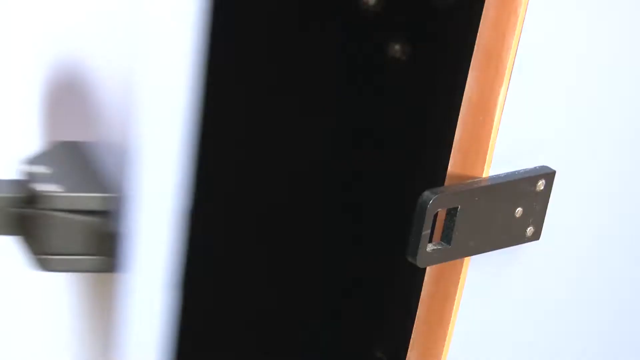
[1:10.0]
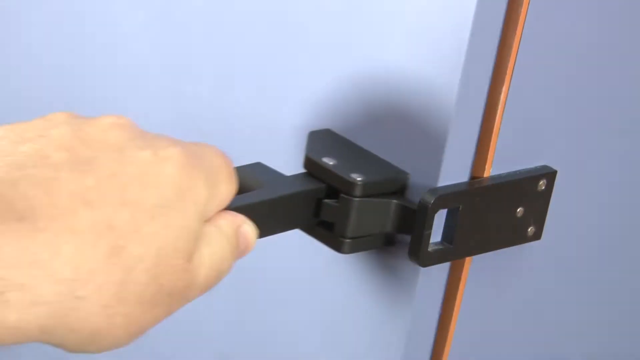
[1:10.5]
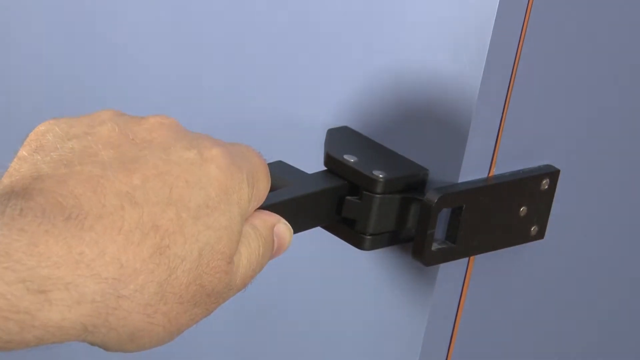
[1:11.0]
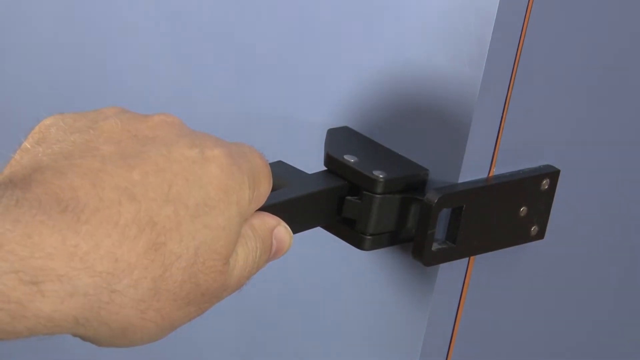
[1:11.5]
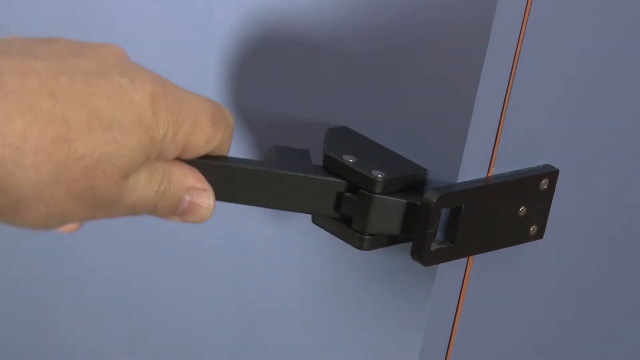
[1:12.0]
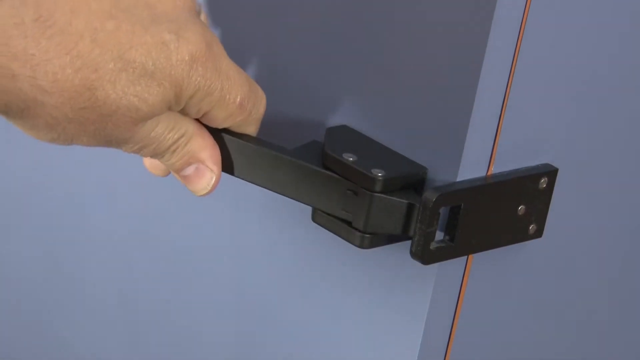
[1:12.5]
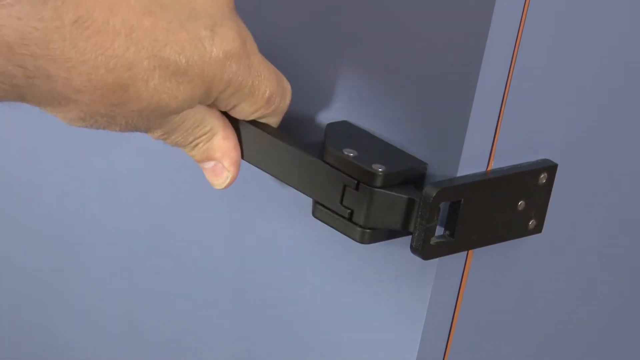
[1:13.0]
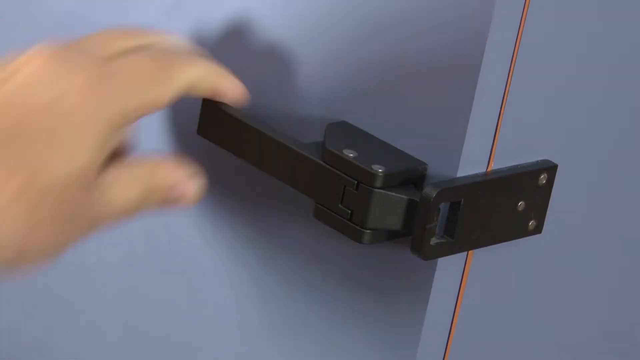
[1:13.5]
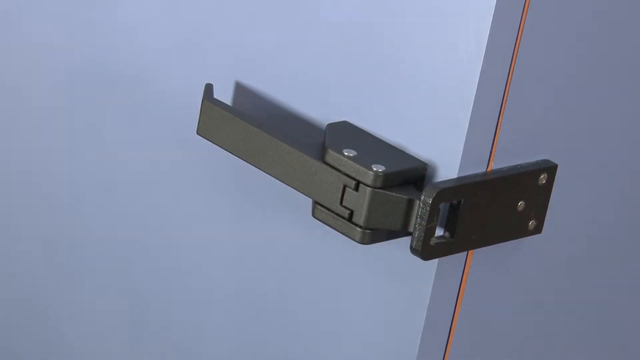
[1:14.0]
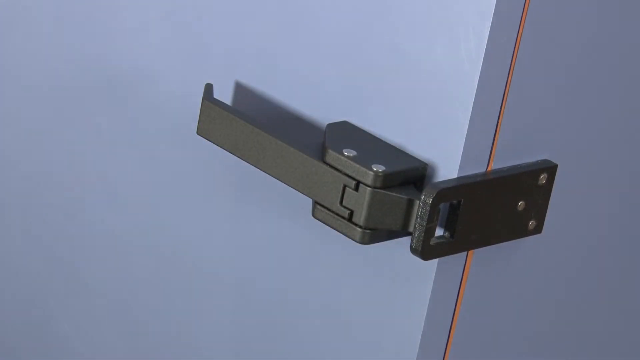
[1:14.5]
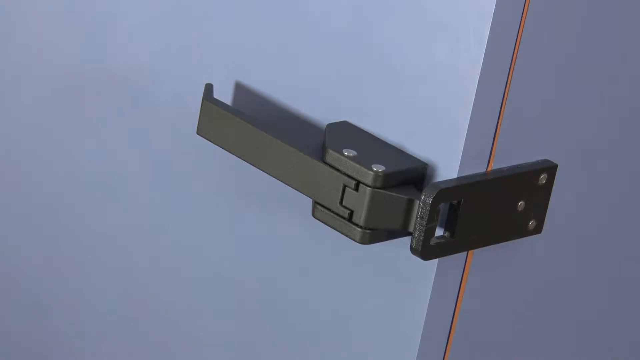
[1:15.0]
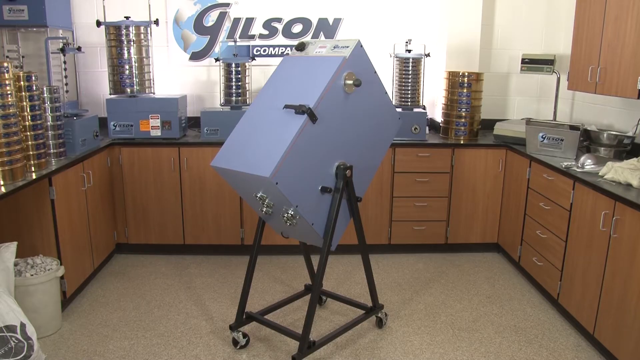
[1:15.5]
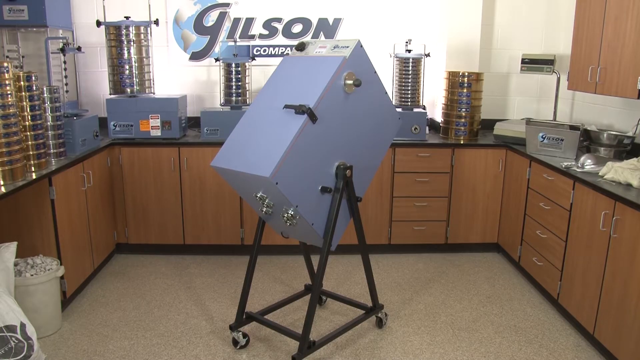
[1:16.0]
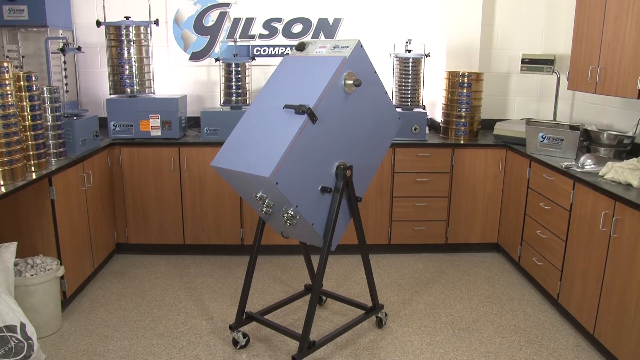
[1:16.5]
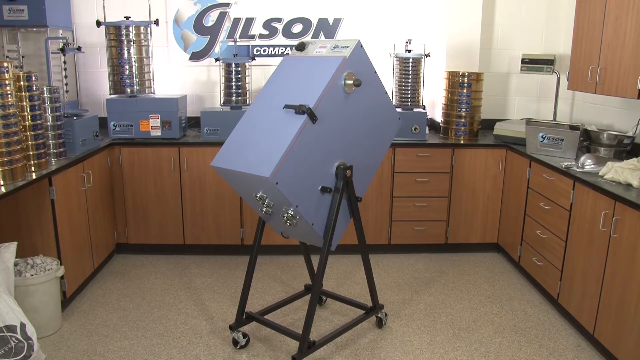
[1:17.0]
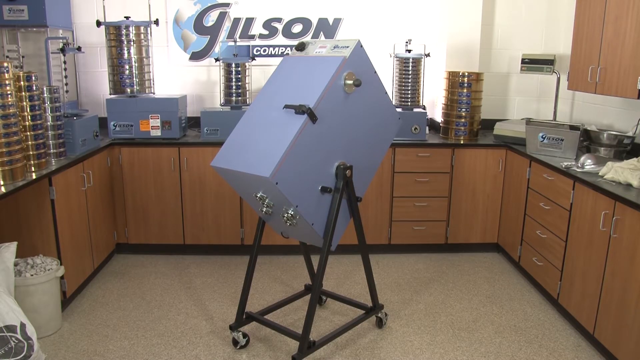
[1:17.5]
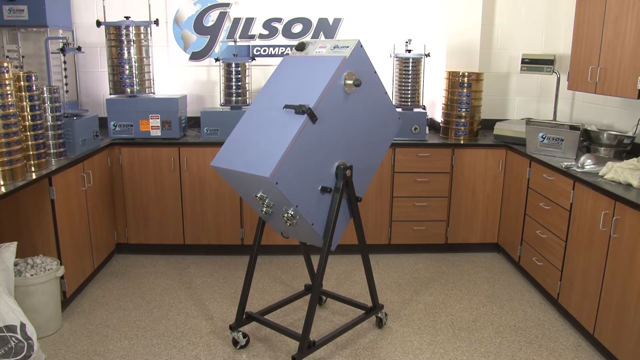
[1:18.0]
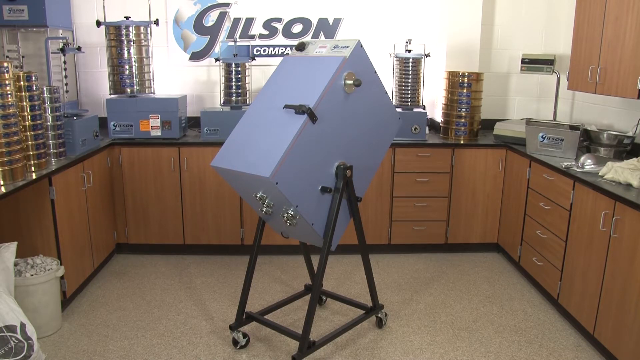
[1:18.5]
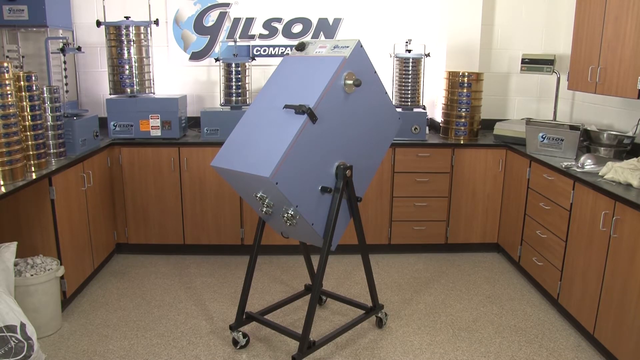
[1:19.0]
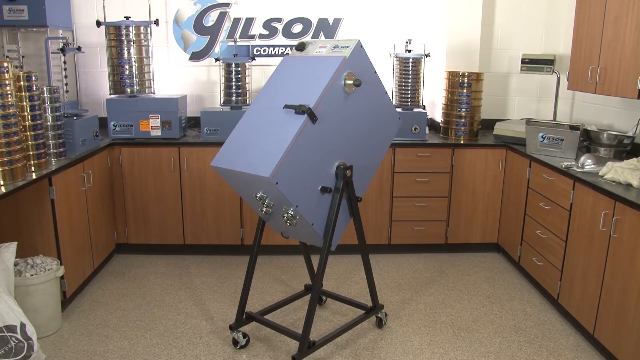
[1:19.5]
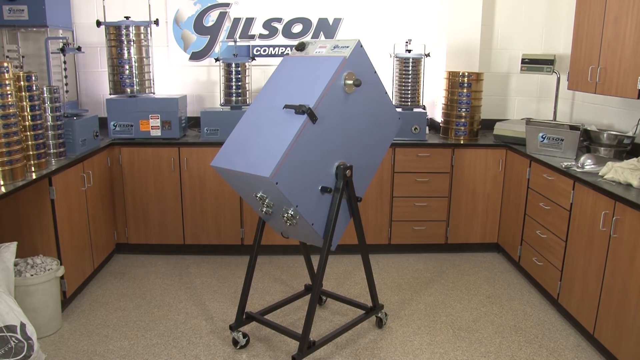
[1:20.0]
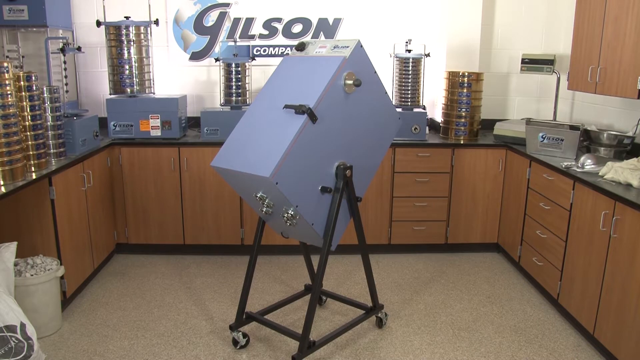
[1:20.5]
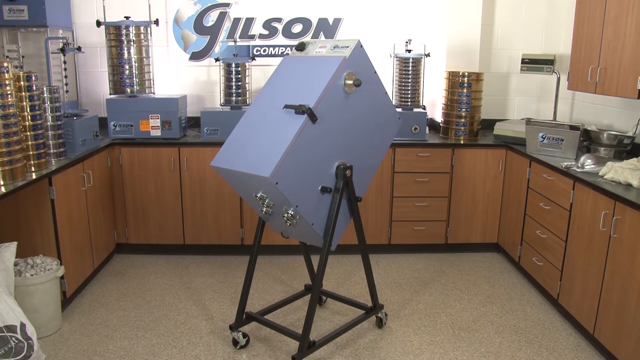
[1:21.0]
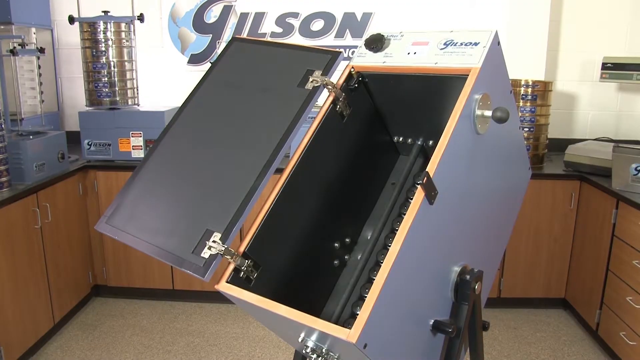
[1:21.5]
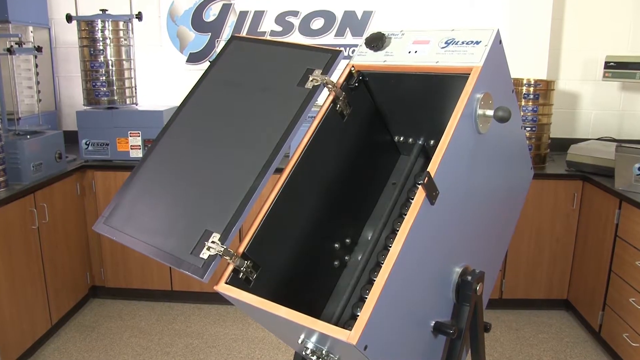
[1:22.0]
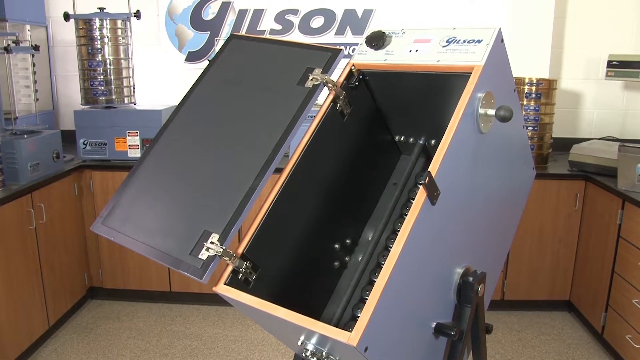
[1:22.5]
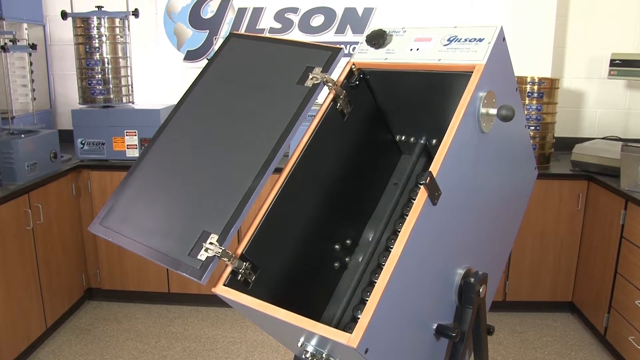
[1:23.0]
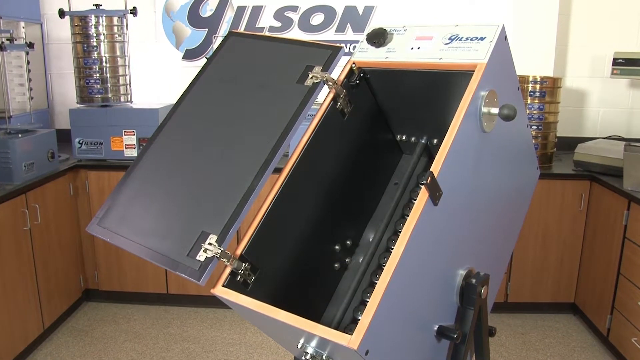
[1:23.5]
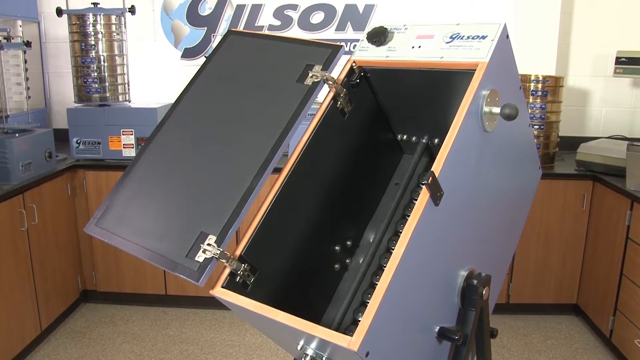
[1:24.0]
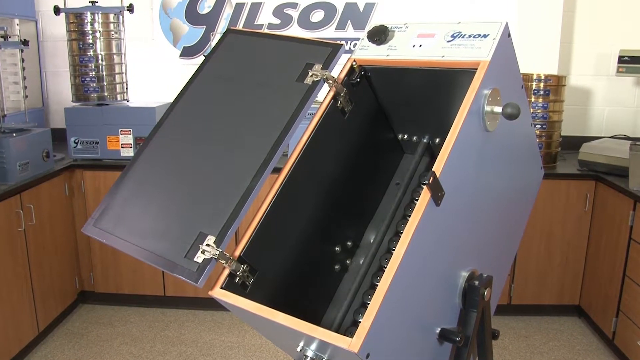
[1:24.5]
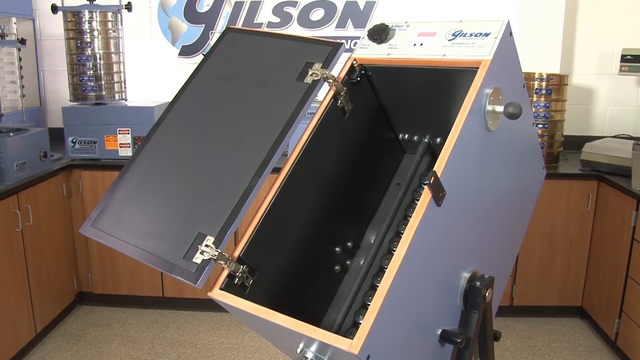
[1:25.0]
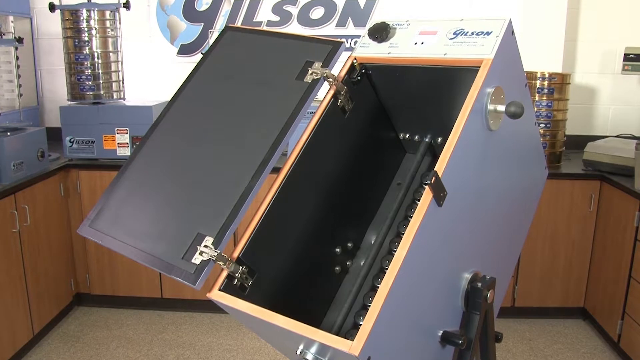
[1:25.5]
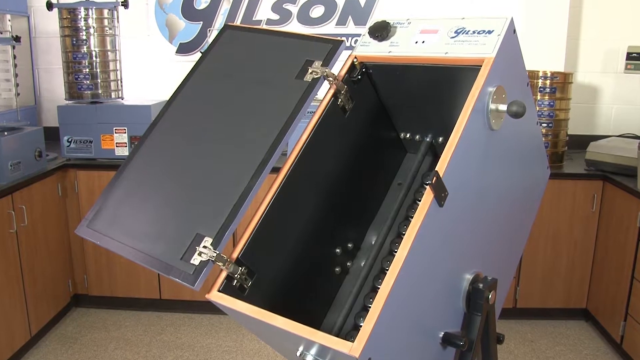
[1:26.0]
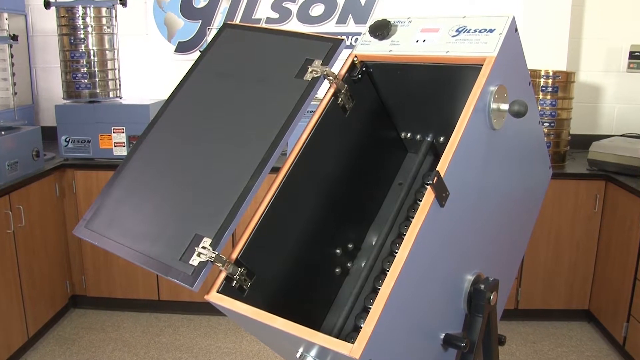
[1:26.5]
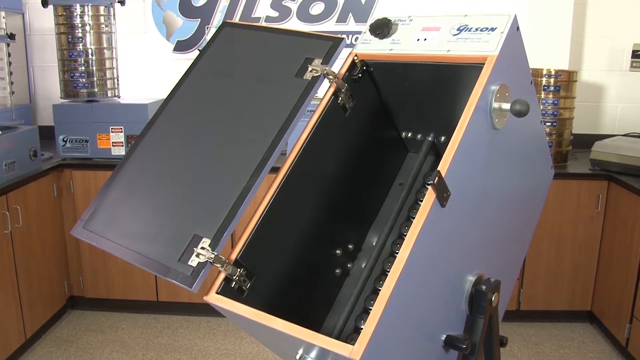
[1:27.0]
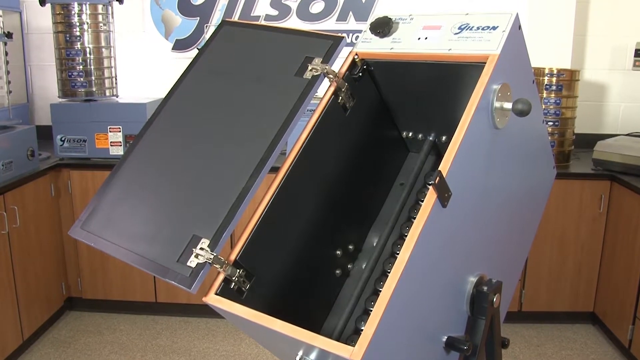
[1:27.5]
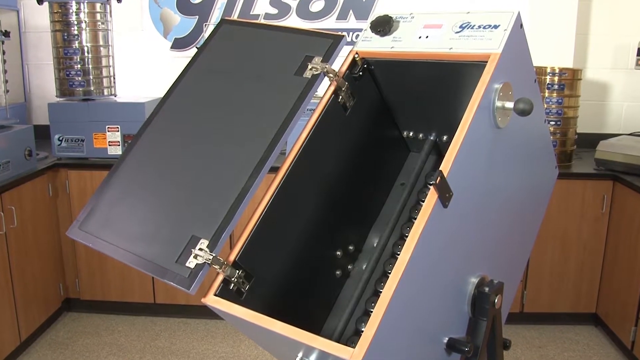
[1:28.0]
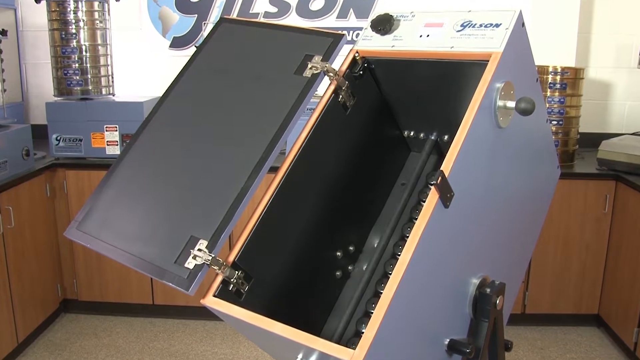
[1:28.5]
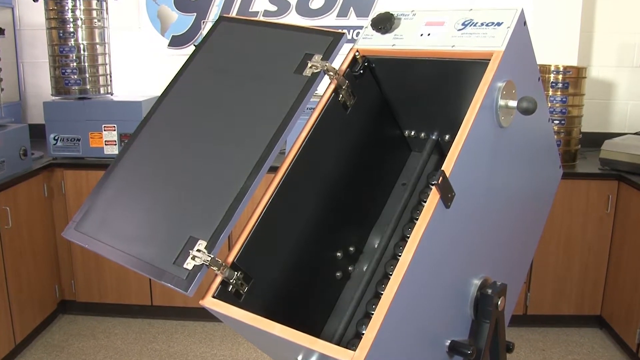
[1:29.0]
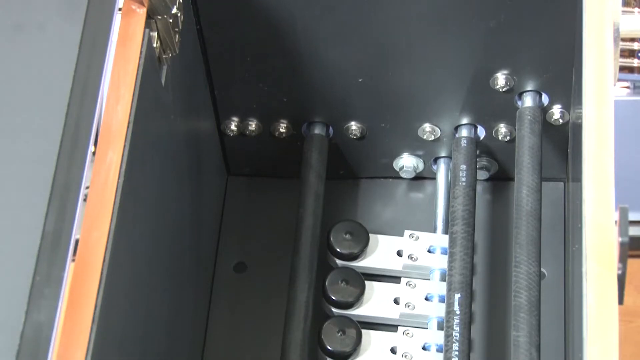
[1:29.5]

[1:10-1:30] A box is opened; the box is black and there is nothing else in it. Some sort of locking mechanism, not clearly visible, is shown, and something goes into the lock.